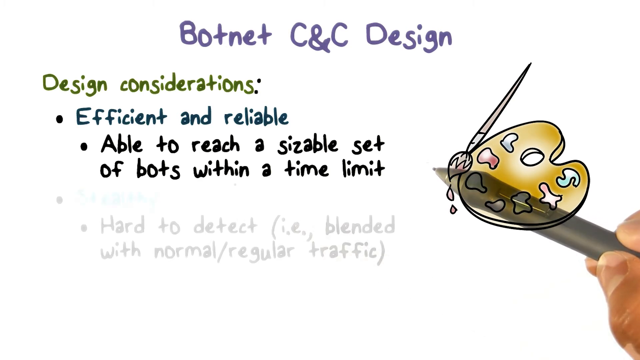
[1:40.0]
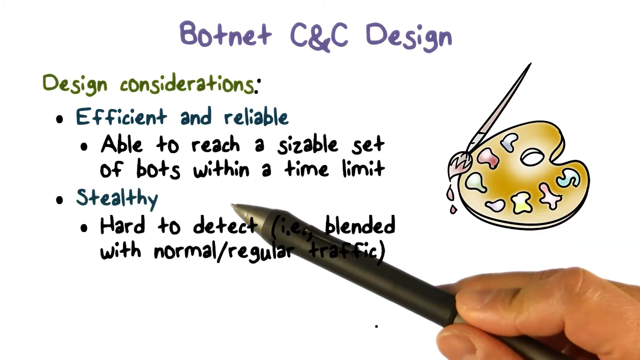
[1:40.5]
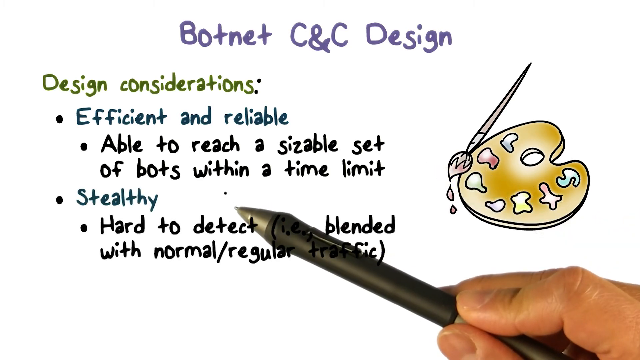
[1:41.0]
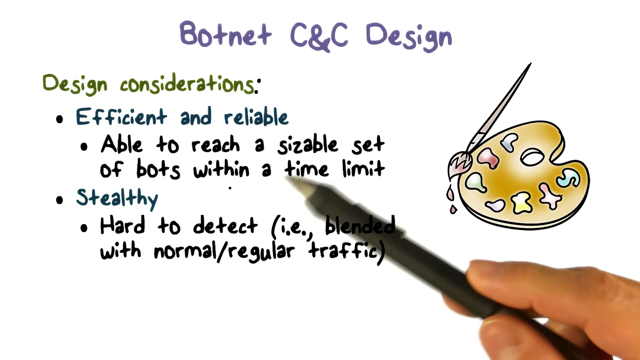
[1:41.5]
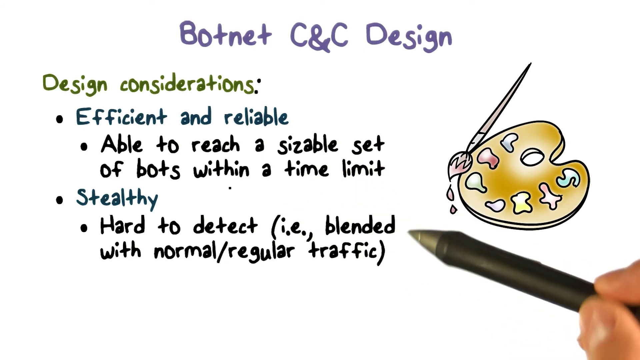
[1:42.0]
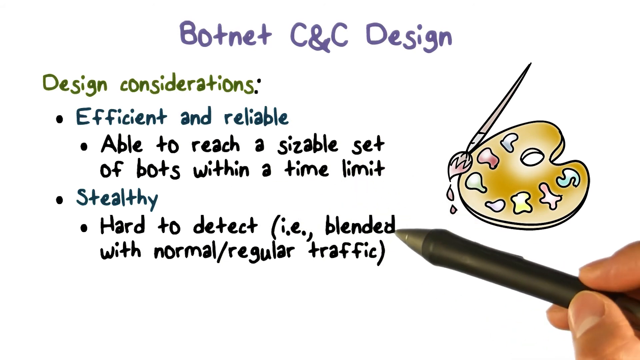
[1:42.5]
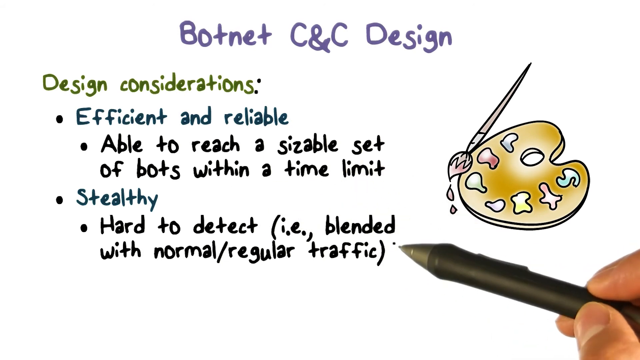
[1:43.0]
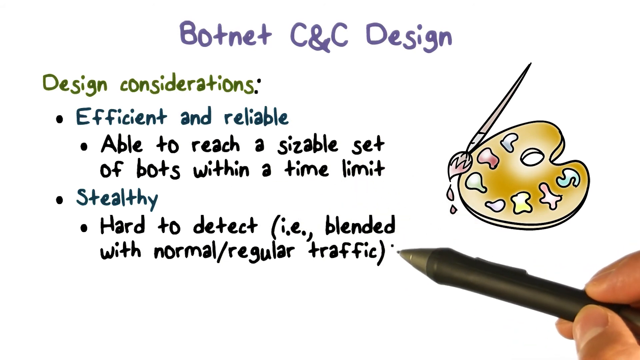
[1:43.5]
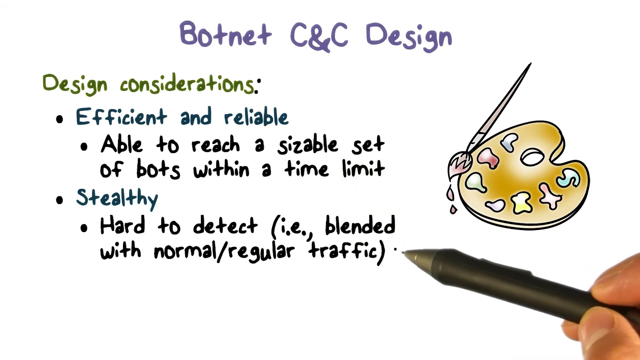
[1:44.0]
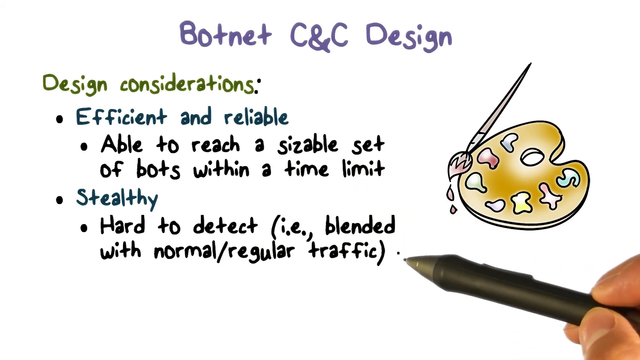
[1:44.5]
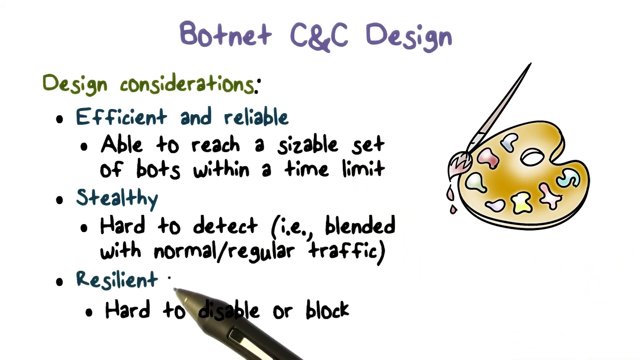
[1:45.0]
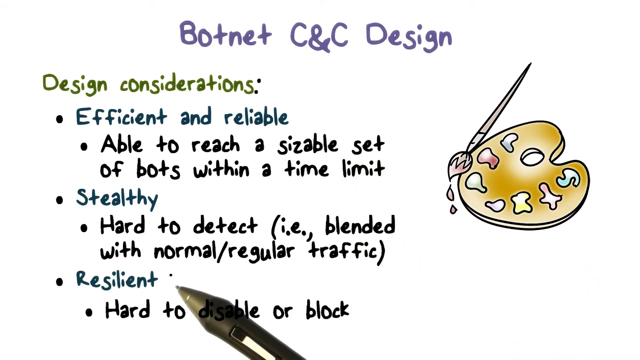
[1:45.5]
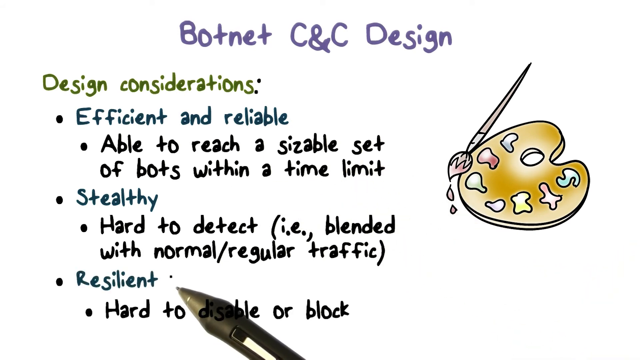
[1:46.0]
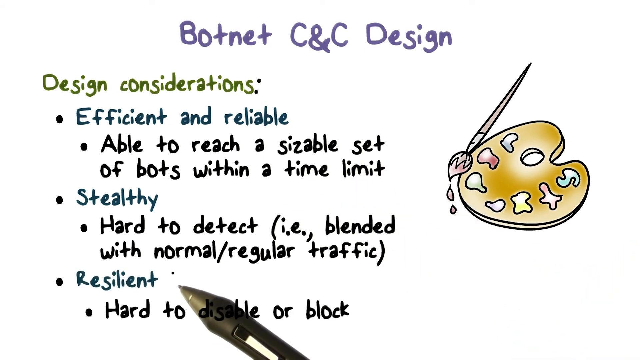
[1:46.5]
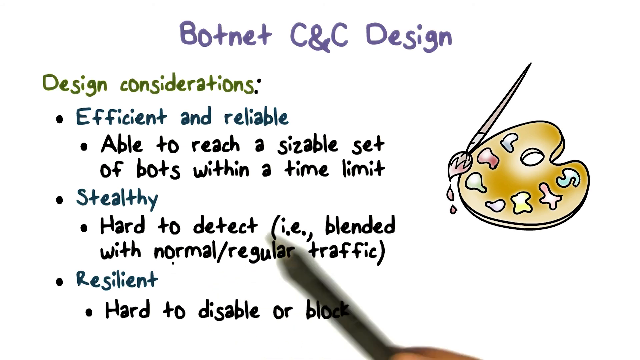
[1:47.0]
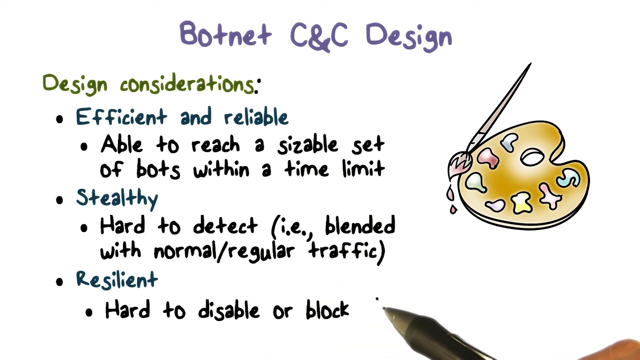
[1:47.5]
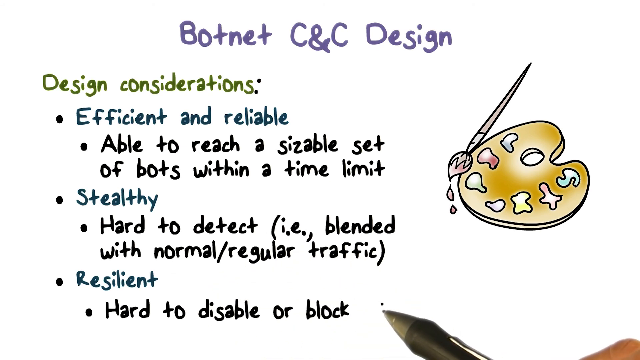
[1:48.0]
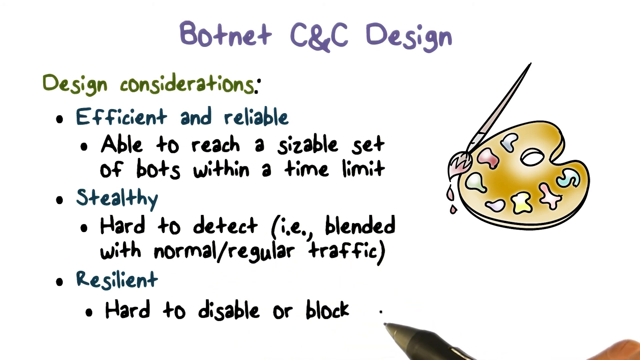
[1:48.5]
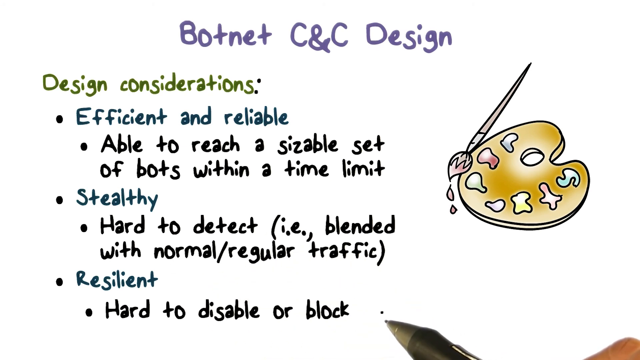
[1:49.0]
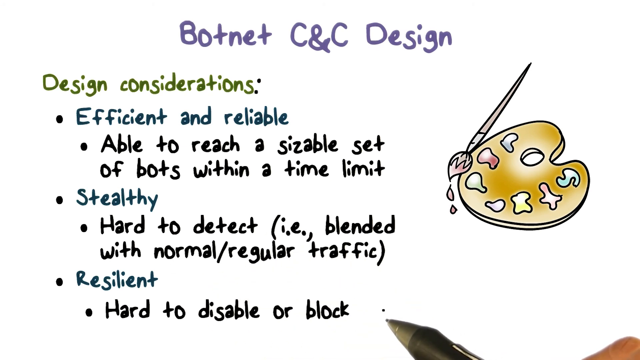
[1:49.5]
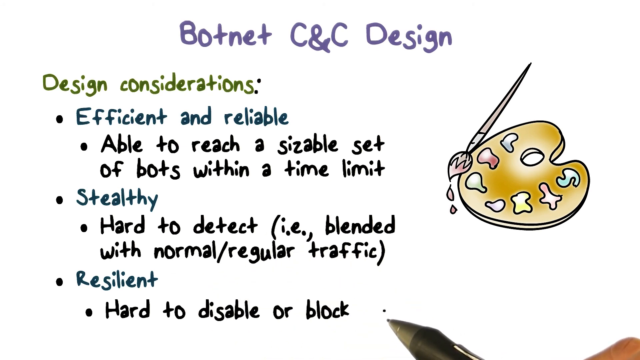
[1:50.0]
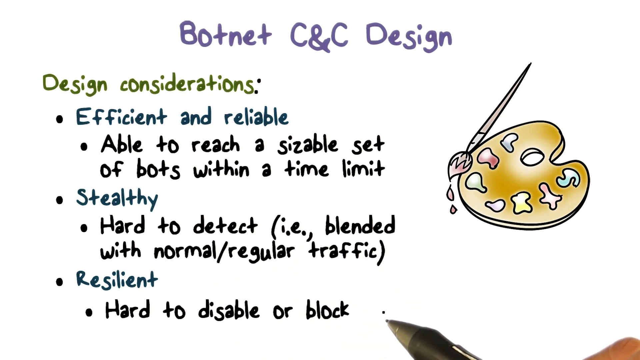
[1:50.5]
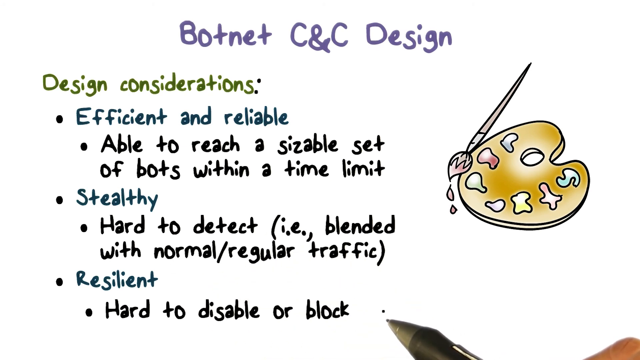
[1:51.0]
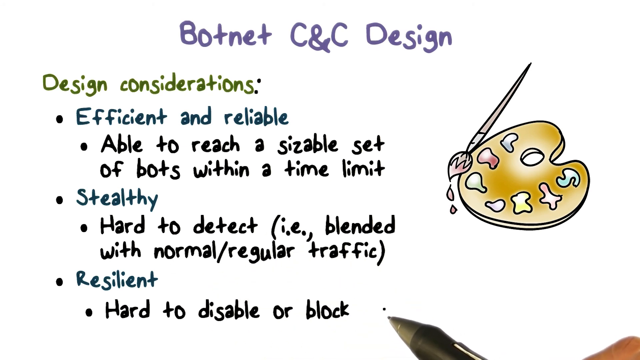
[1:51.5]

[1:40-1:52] More text appears below the black text. Blue text with a bullet point reads "stealthy," on the same line as the other blue text, and below it black text reads "hard to detect (blended with normal regular traffic)." Below that, another blue bullet point reads "resilience," with black text below it beginning "hard to." The pen highlights all this information going down from the first blue text to the last, staying at the back of the text as if reading each sentence line by line, and the hand can no longer be seen on the screen.